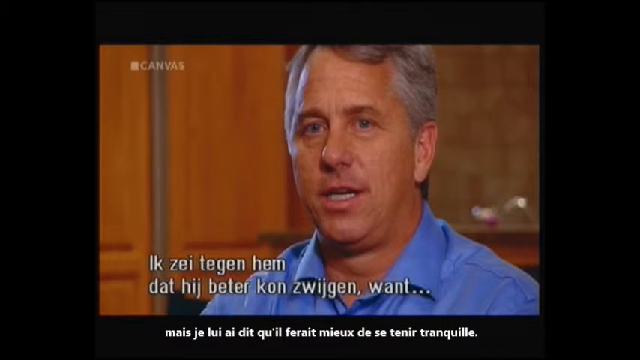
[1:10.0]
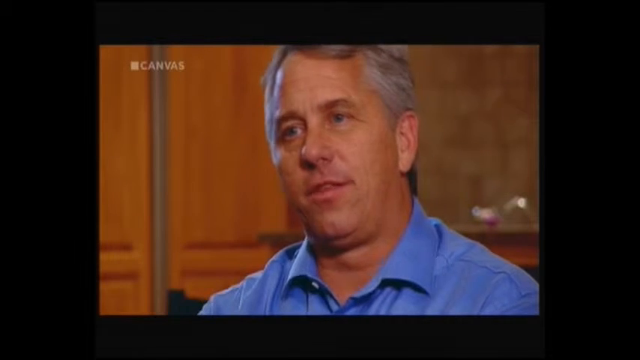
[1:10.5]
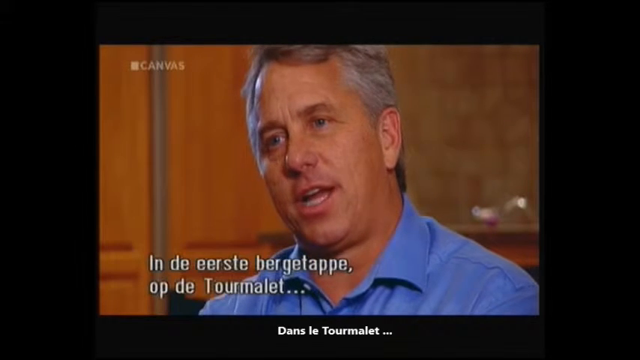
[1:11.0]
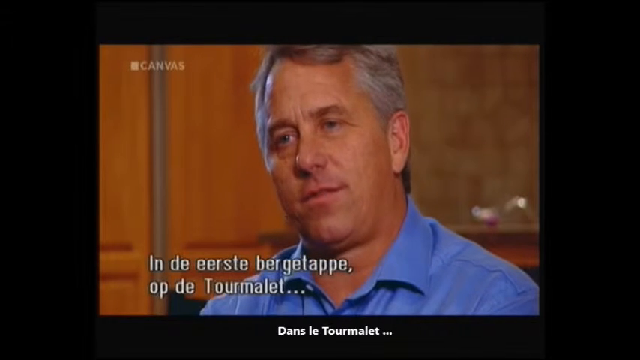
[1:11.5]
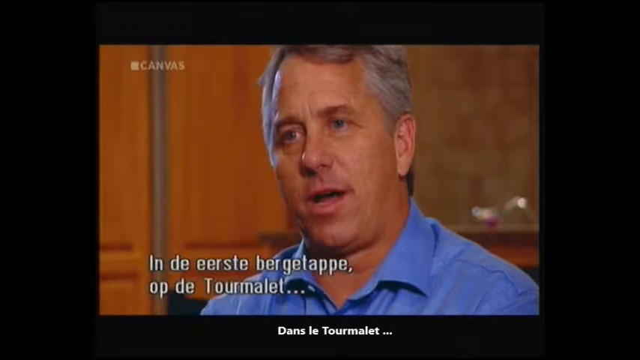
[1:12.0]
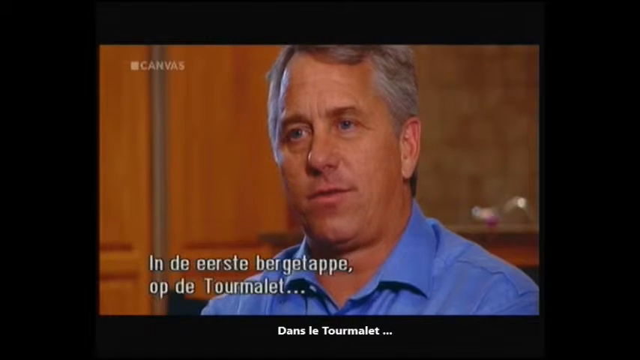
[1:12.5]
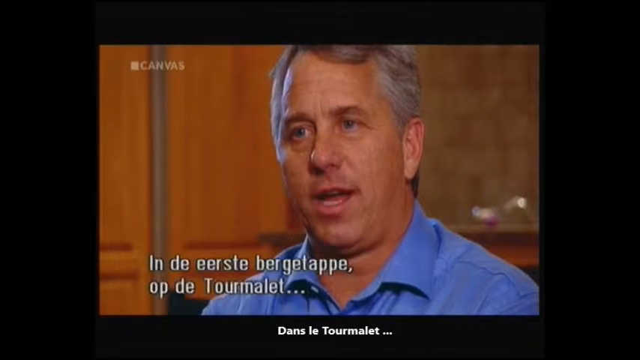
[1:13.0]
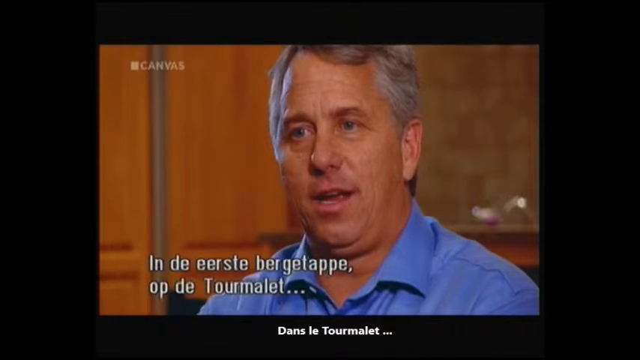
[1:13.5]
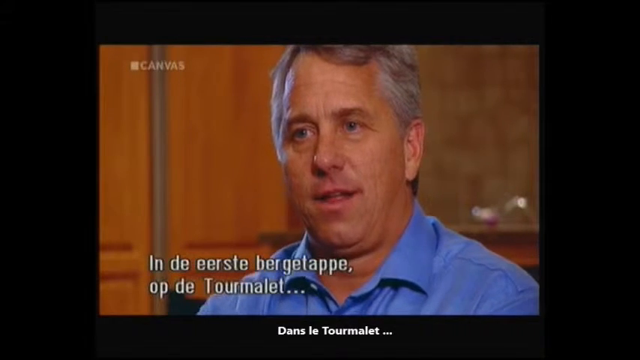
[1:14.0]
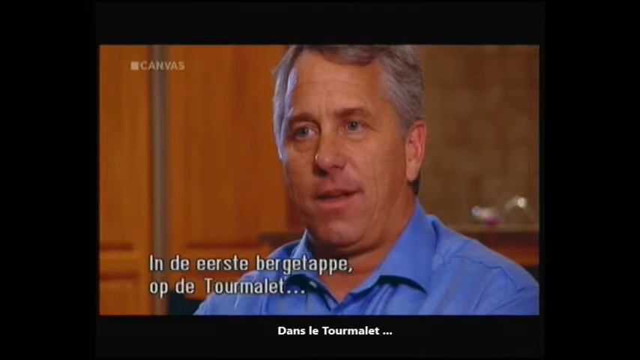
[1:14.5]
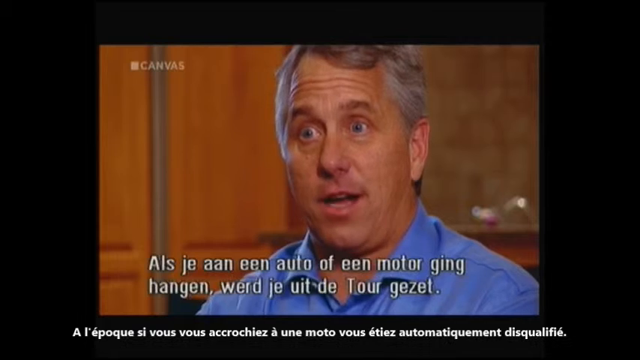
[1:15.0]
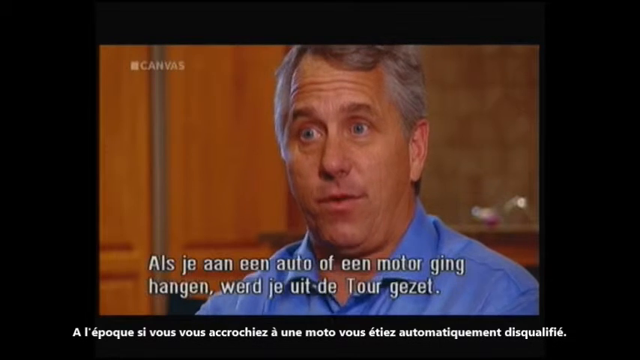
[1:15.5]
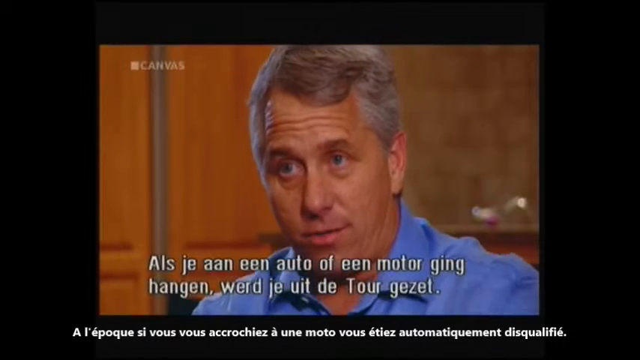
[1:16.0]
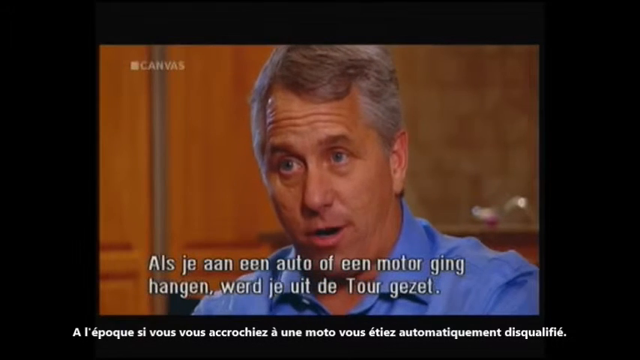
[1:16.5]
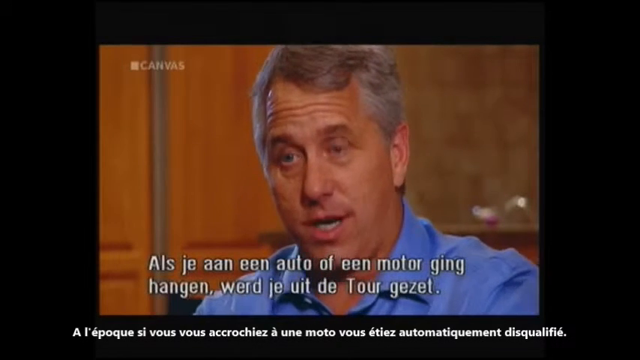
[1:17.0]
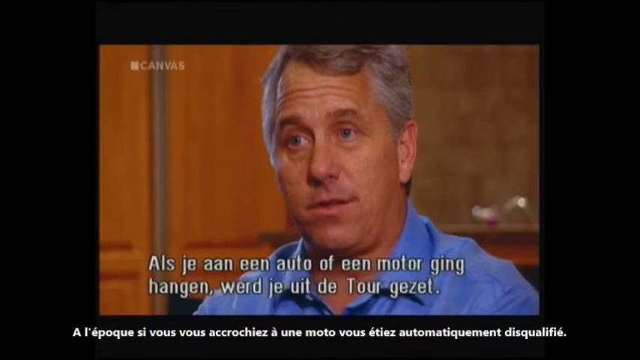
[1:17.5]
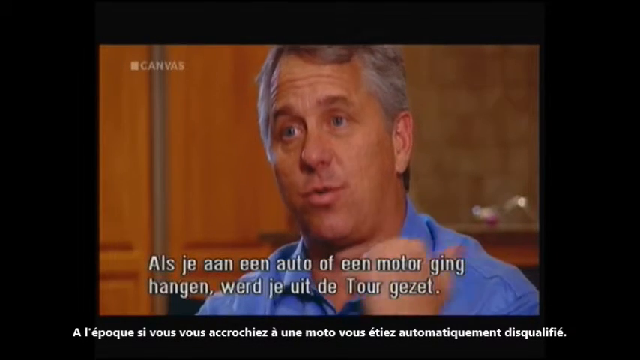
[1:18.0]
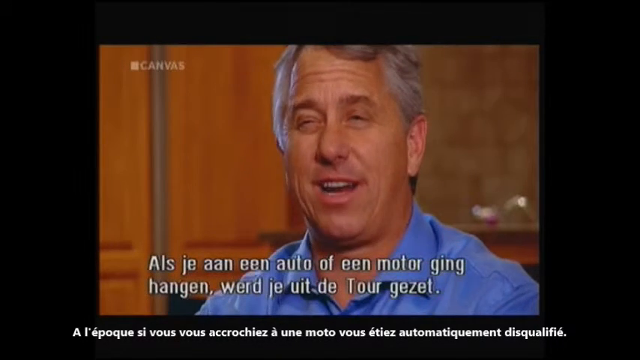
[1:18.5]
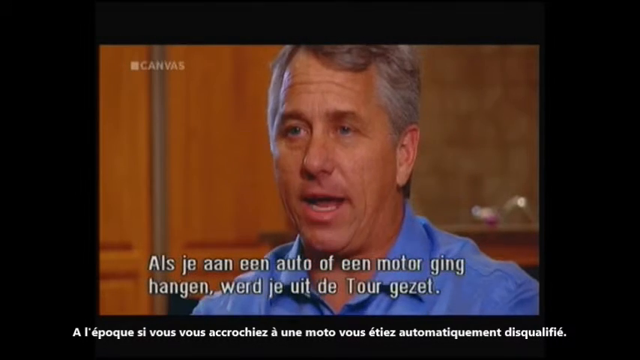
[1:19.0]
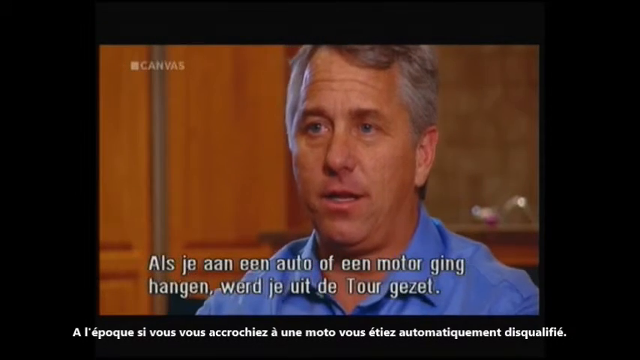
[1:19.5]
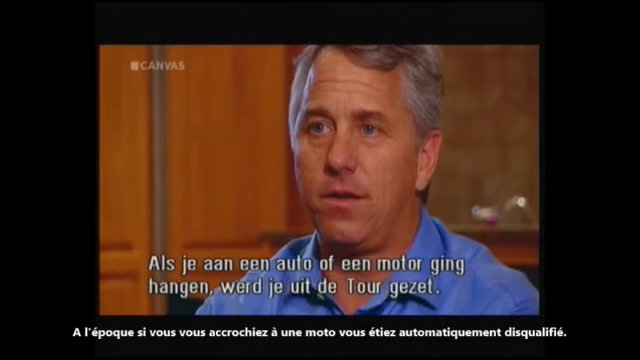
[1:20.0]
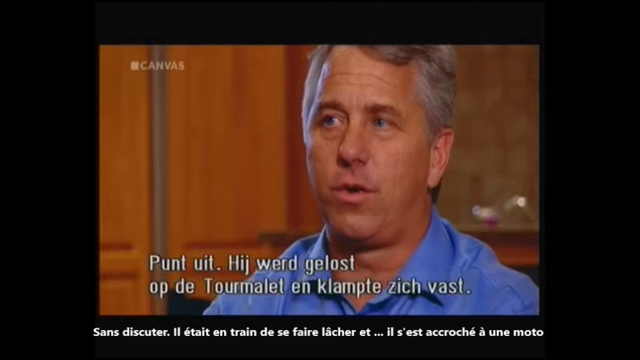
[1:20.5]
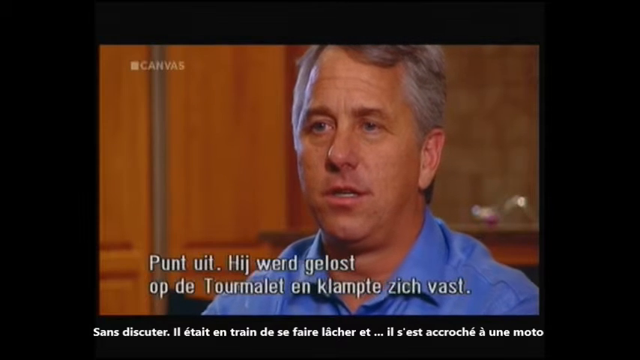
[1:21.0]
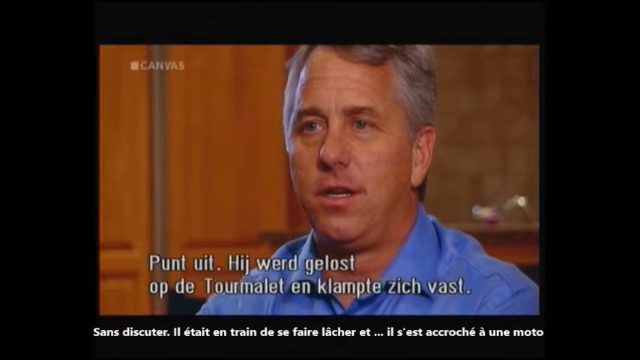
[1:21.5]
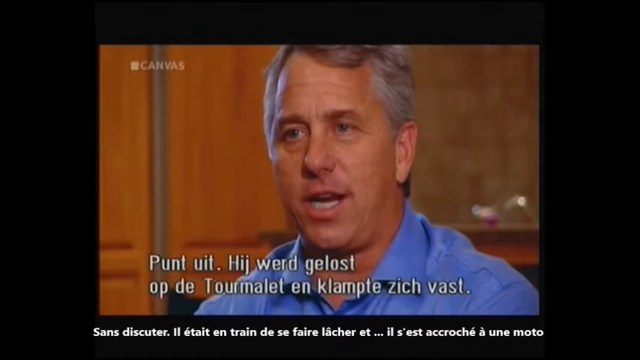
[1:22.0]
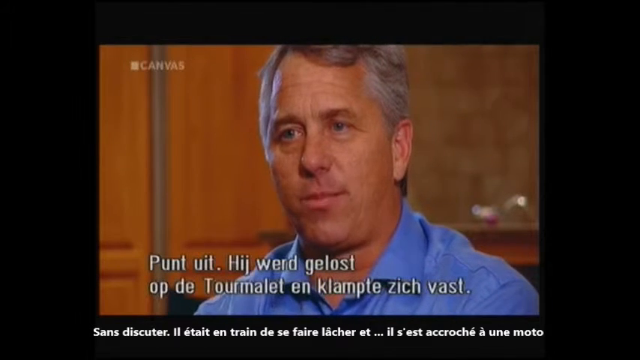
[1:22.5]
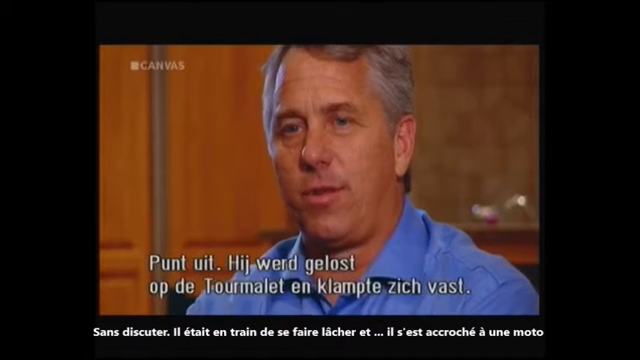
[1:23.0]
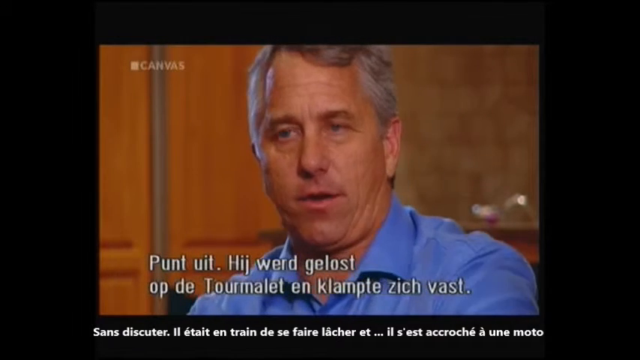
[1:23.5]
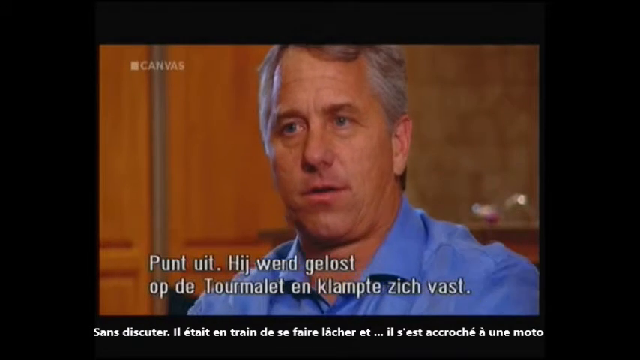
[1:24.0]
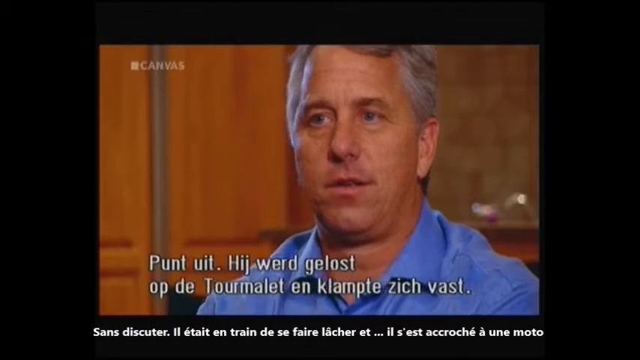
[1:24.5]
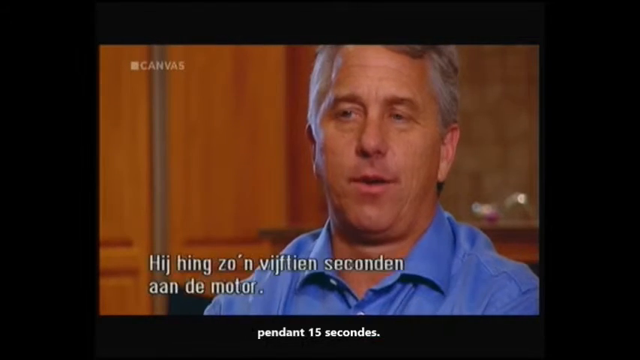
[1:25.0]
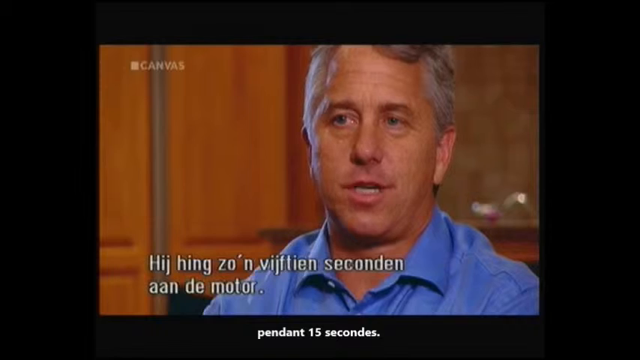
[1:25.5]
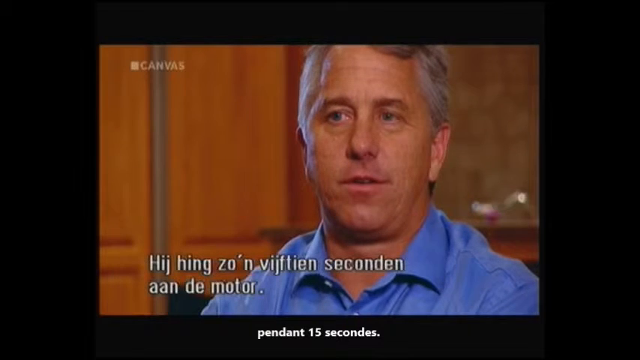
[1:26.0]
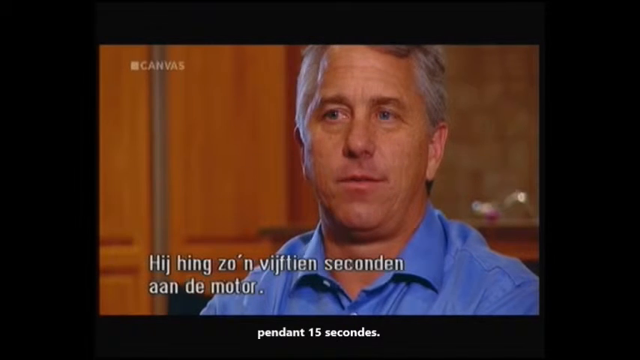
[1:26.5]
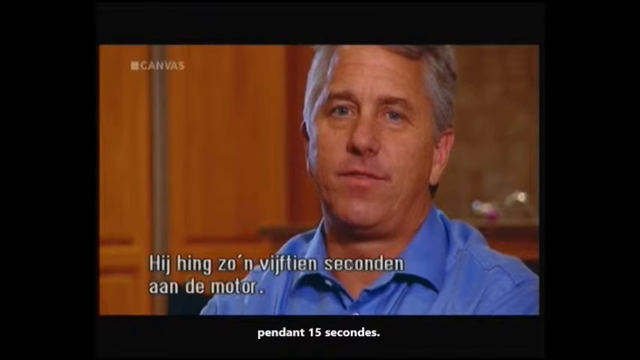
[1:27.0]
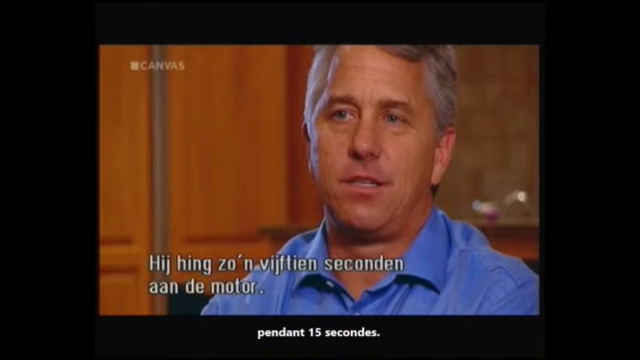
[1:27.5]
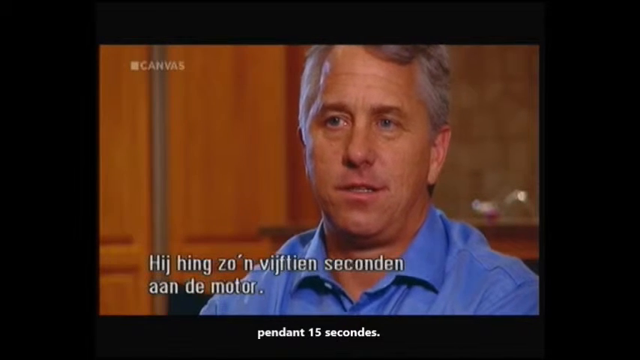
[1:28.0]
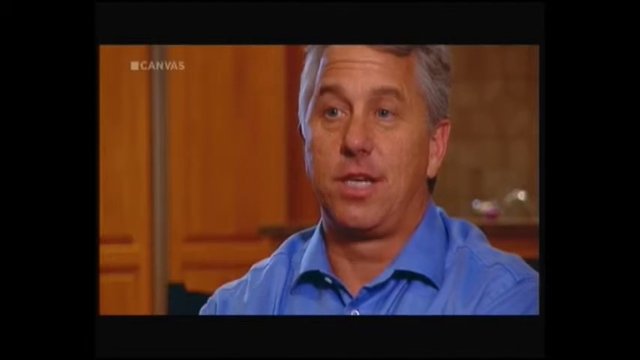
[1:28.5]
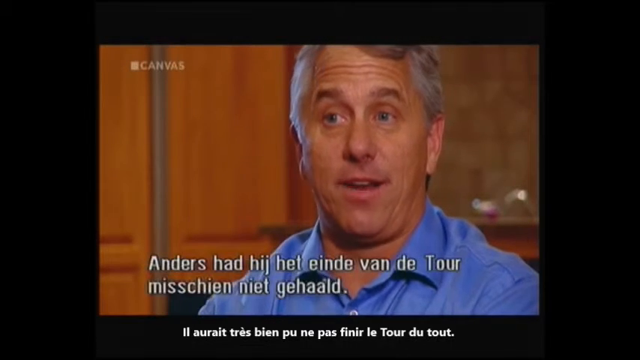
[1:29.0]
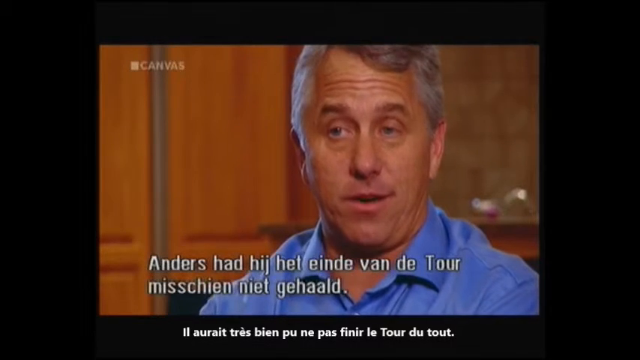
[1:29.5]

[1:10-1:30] The video continues with the middle-aged Caucasian man, who looks to be in his 50s, with some graying hair and slight balding at the front. He has white skin with a tan and blue eyes and wears a blue collared shirt. Two sets of subtitles appear at the bottom of the screen: the top set looks like German and the bottom set looks like French. He speaks while most likely looking at the interviewer and slightly raises his eyebrows. He points behind him with his thumb and squints his eyes at the same time, seemingly speaking about something either passionate or a little annoying to him. He looks down and to the left for a bit, then back up at the interviewer. He keeps eye contact most of the time but looks slightly to the left at the camera for a second, then back at the interviewer, and raises his eyebrows one more time.